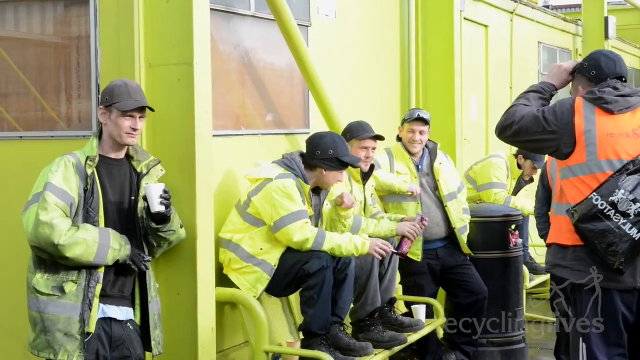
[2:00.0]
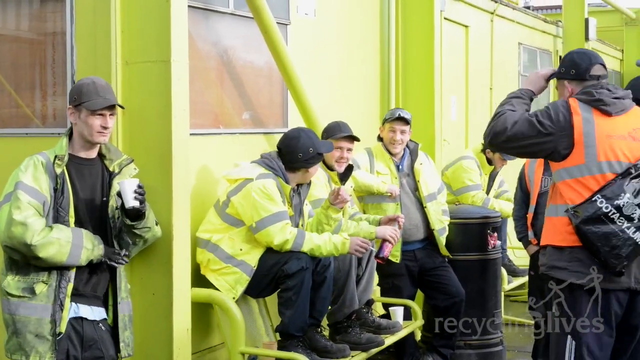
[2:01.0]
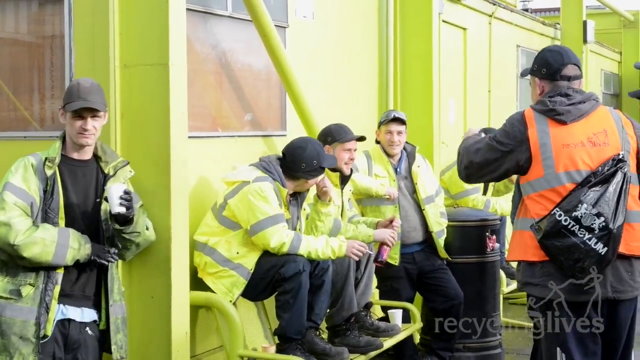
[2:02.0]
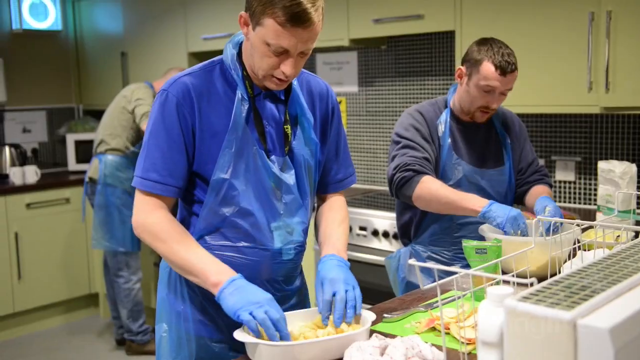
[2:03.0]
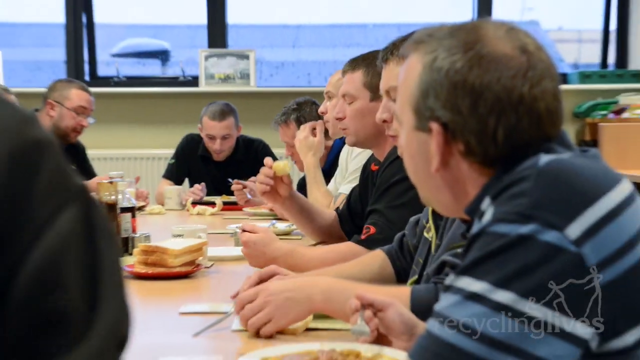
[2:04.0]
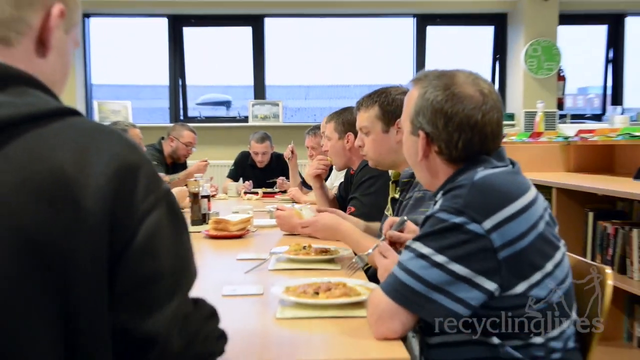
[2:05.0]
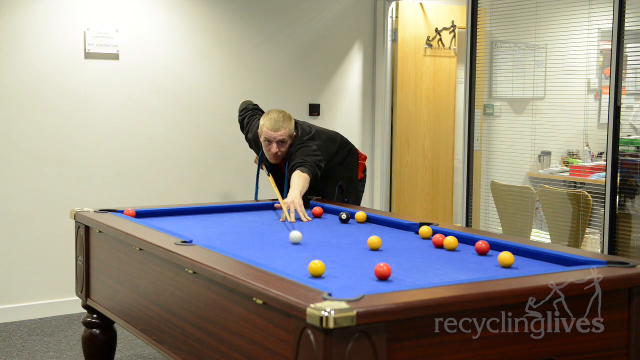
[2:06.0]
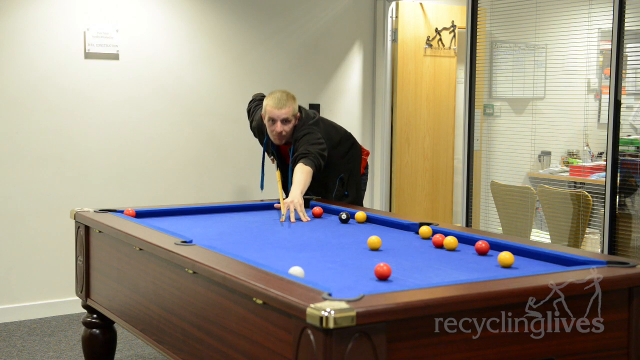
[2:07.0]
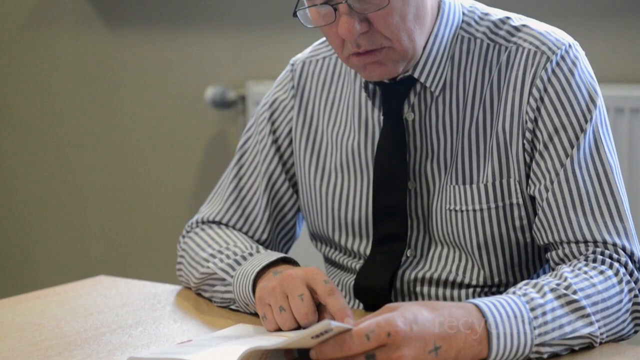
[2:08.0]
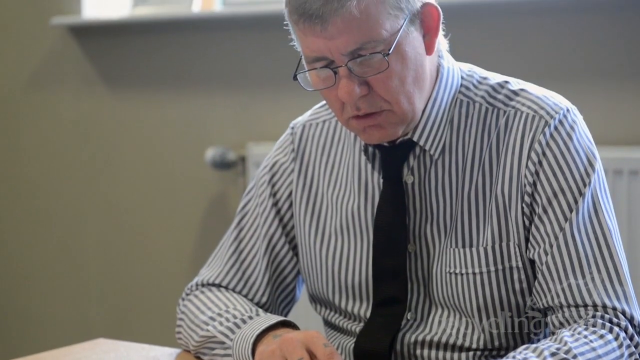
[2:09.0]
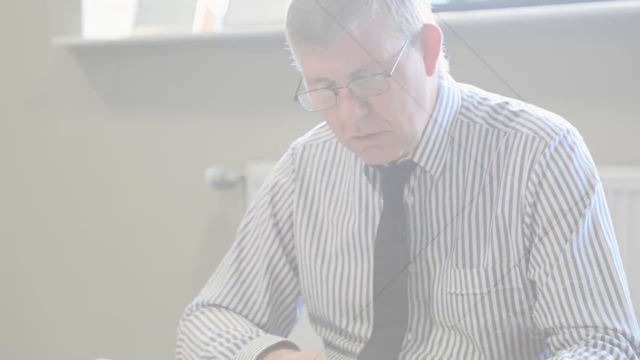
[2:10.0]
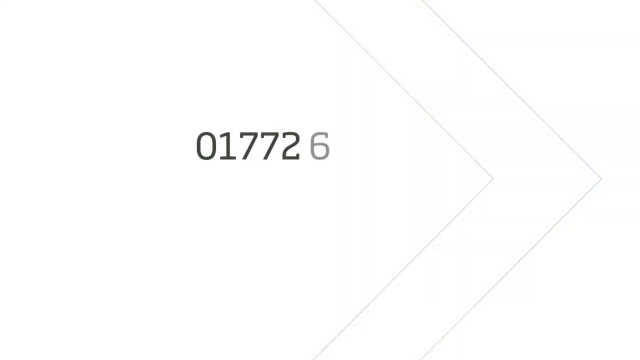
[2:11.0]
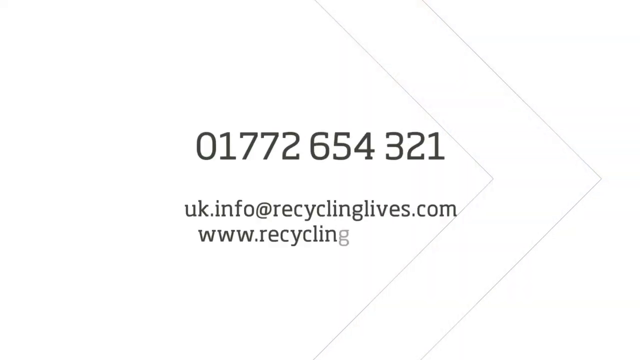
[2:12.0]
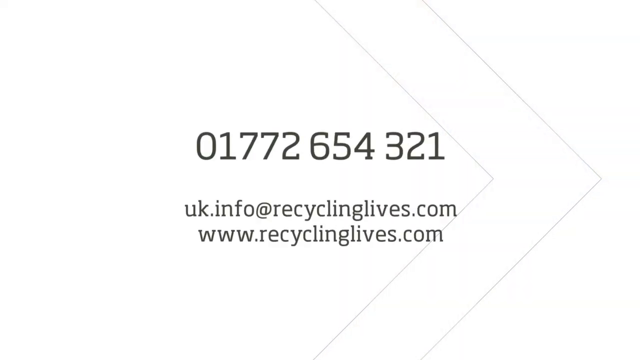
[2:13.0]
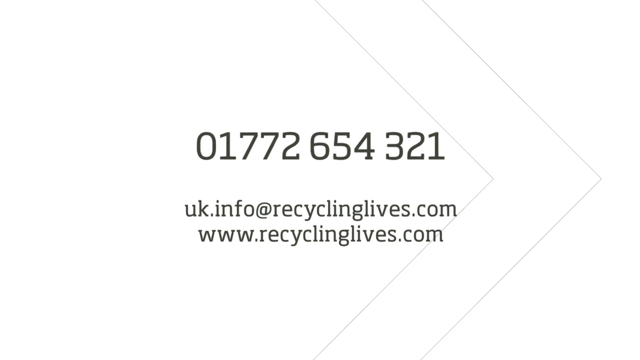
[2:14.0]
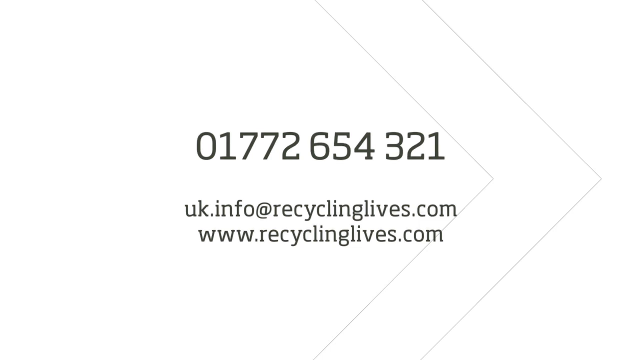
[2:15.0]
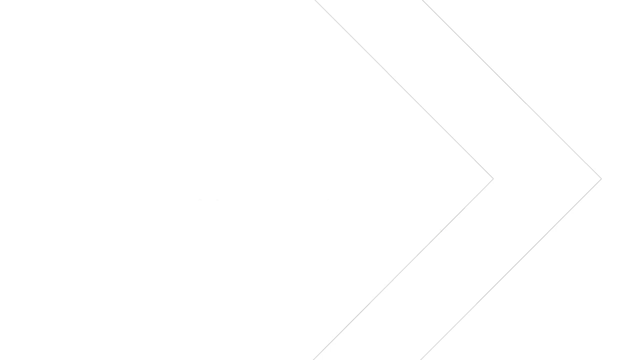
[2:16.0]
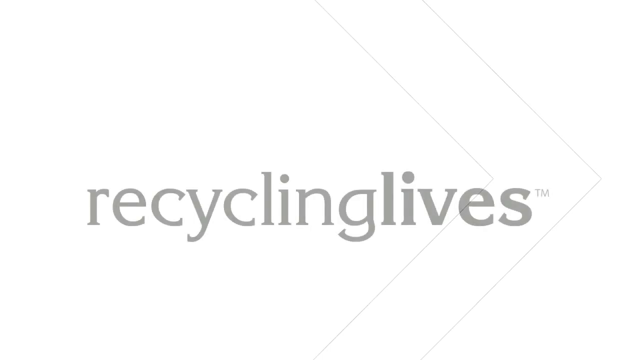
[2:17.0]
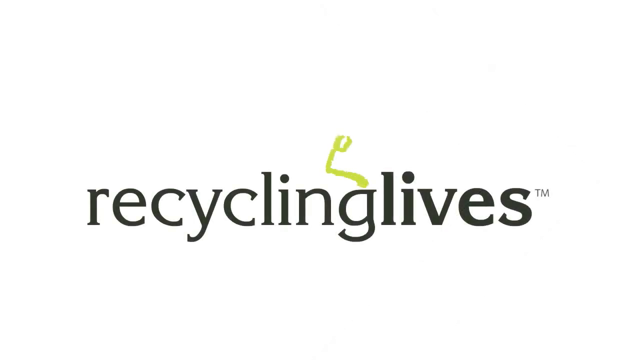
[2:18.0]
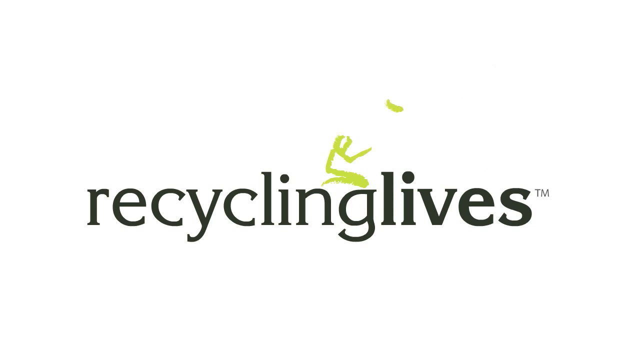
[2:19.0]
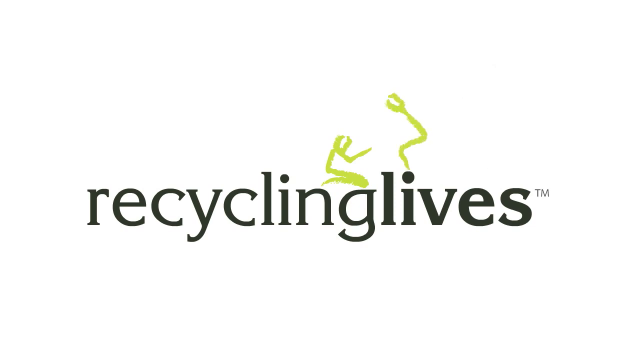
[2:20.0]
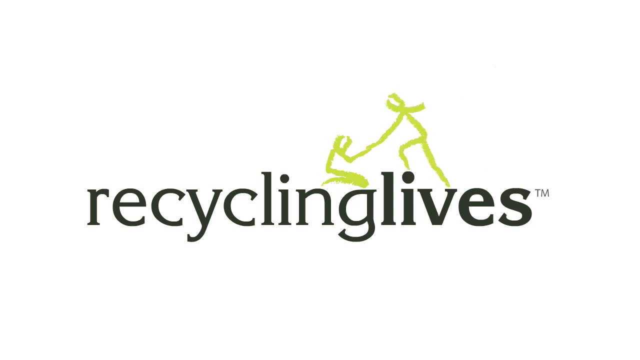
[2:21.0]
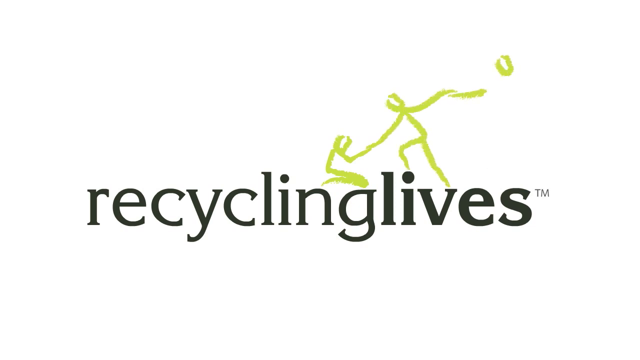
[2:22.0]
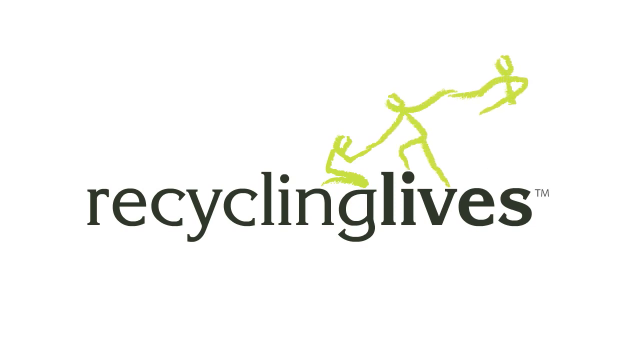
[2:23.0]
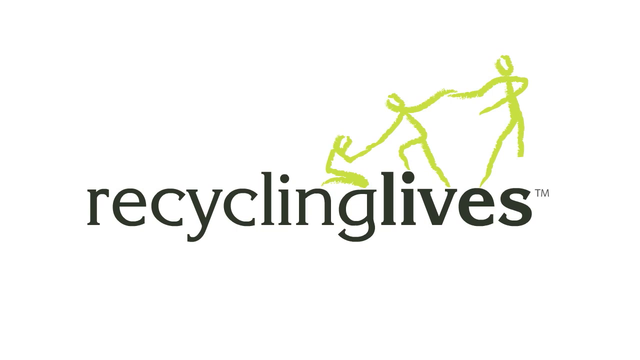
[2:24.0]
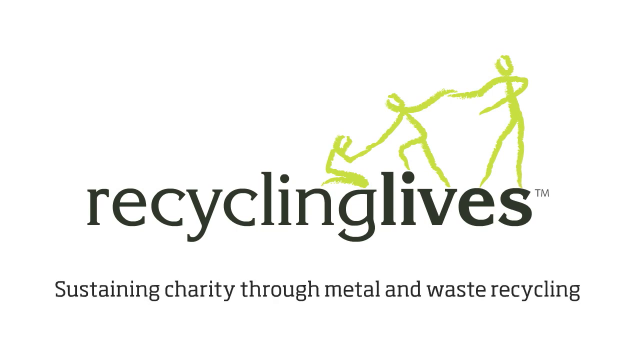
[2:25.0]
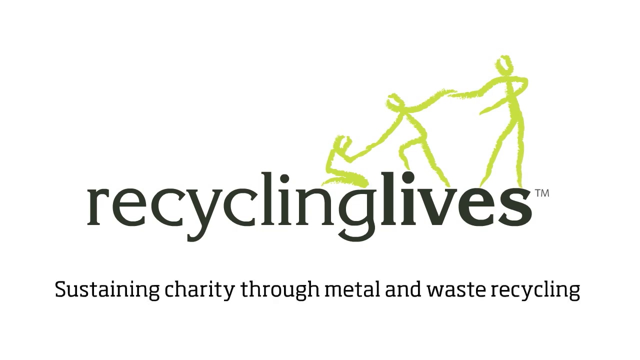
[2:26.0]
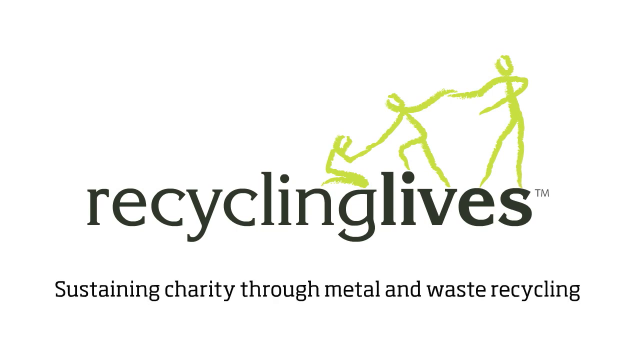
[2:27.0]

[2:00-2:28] A group of men stand together, possibly in a break room, in front of walls painted bright yellow. The man on the right wears an orange and gray vest, while the rest wear yellow and gray vests, with gray and black shirts and black pants; some wear black gloves. The man on the left holds a white styrofoam cup and wears a gray ball cap, and most of the men wear ball caps. They stand around talking and smiling a little. Inside, men wearing blue plastic aprons and blue latex gloves, the one closest to the camera in a blue shirt, work with containers holding something that might be food, possibly in a kitchen. Men then eat together at a long wooden table, with windows in the back and wooden shelves behind them; there is food on their plates, hard to make out, possibly a sandwich on one plate. They are white men, most with short dark hair. A man dressed in black plays pool at a blue pool table with yellow, red, white and black balls, and takes a shot. A man with glasses and a striped shirt reads some kind of materials at a desk. At the end, a phone number, an email address and a website for Recycling Lives appear, along with the animated Recycling Lives logo in black, showing three yellow stick figures holding hands, and the slogan "Sustaining charity through metal and waste recycling".